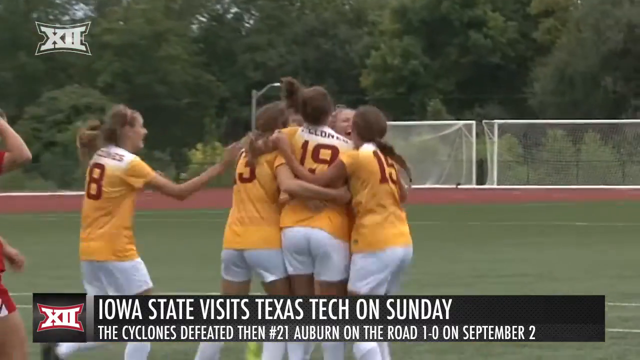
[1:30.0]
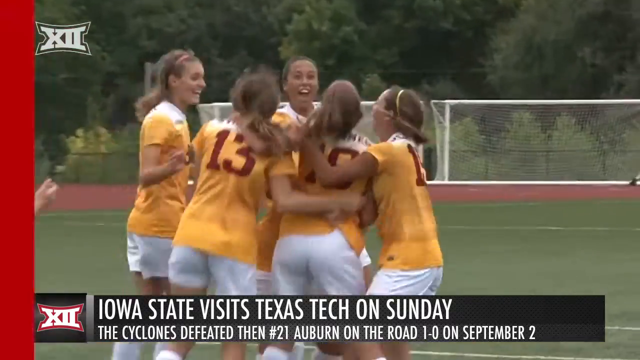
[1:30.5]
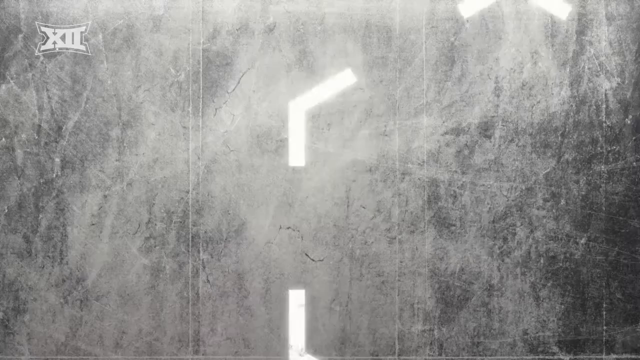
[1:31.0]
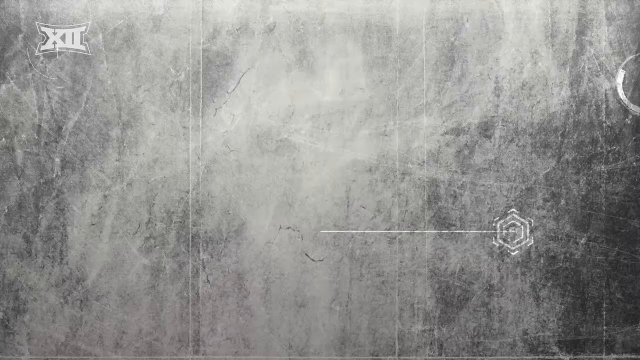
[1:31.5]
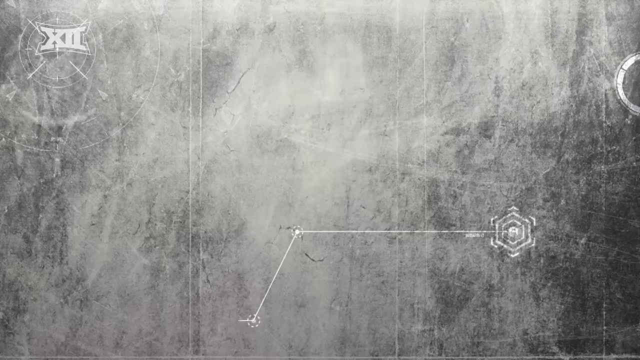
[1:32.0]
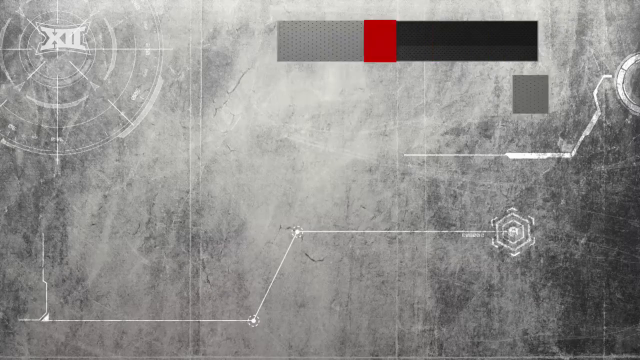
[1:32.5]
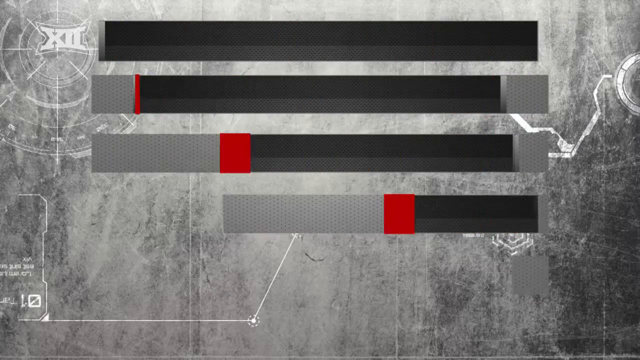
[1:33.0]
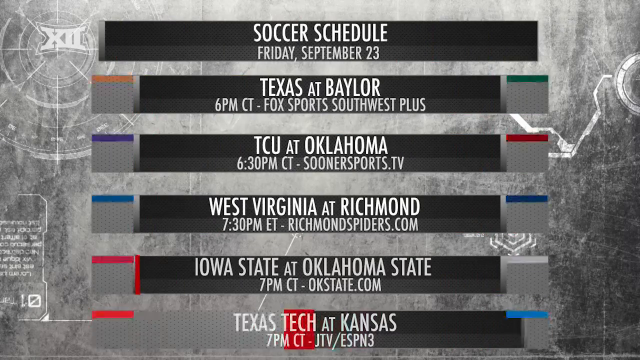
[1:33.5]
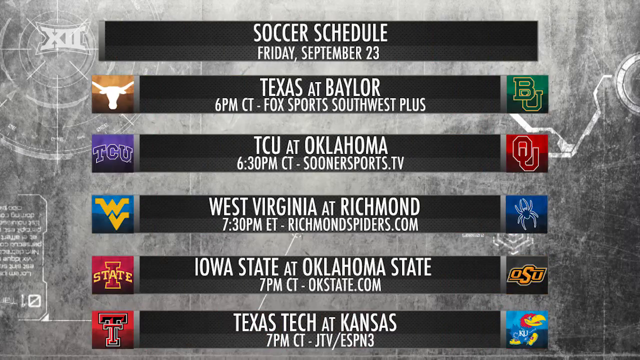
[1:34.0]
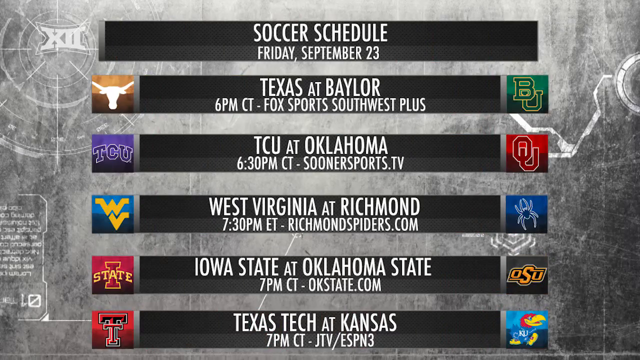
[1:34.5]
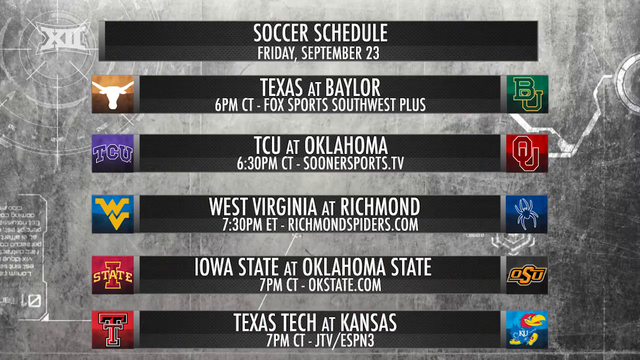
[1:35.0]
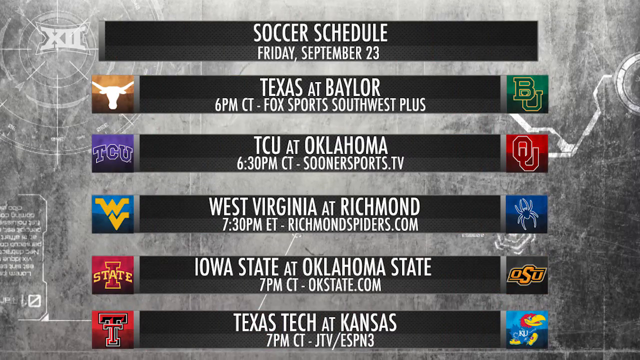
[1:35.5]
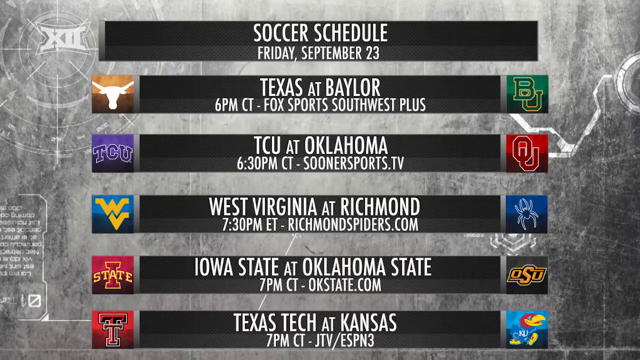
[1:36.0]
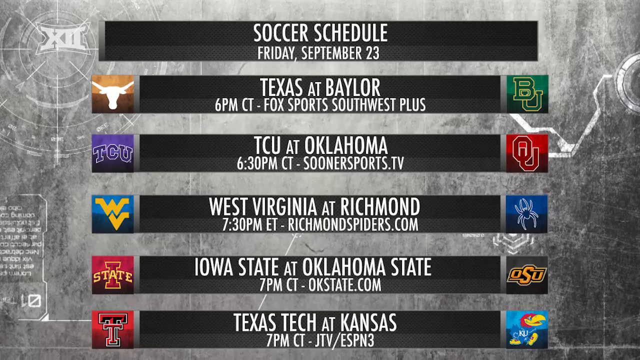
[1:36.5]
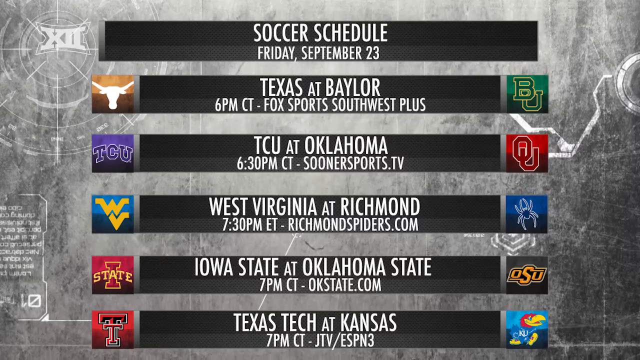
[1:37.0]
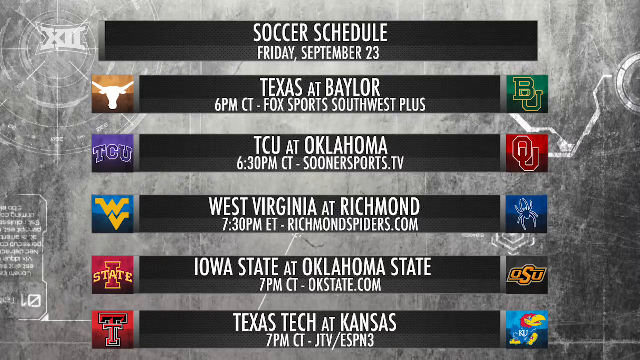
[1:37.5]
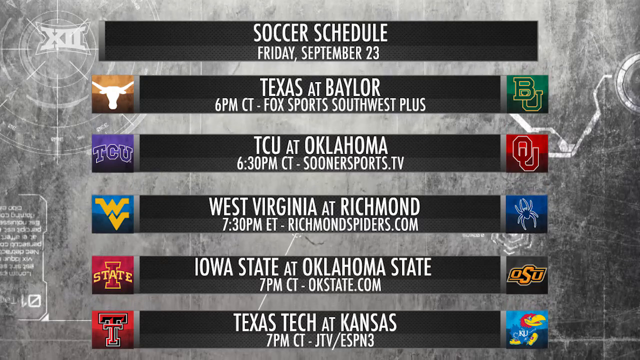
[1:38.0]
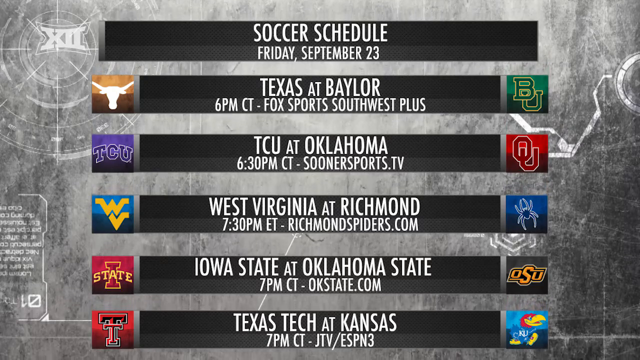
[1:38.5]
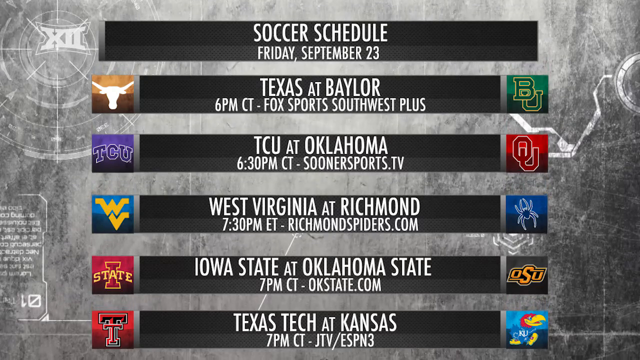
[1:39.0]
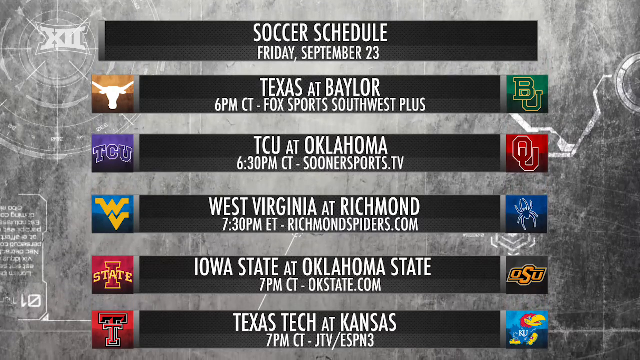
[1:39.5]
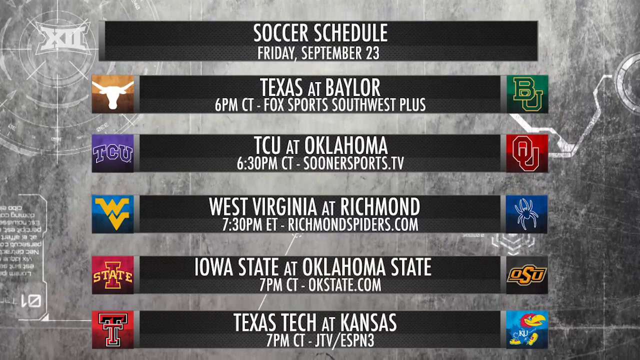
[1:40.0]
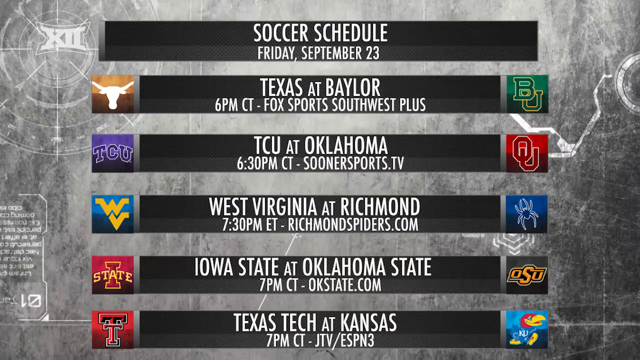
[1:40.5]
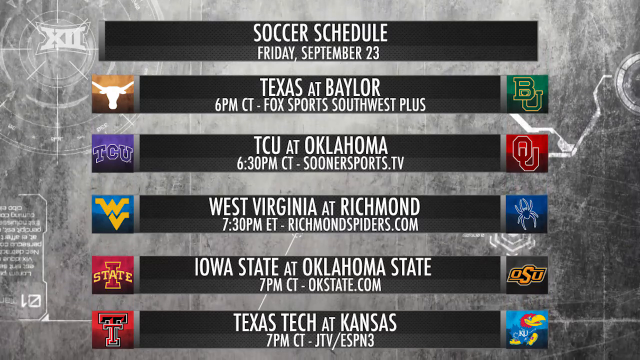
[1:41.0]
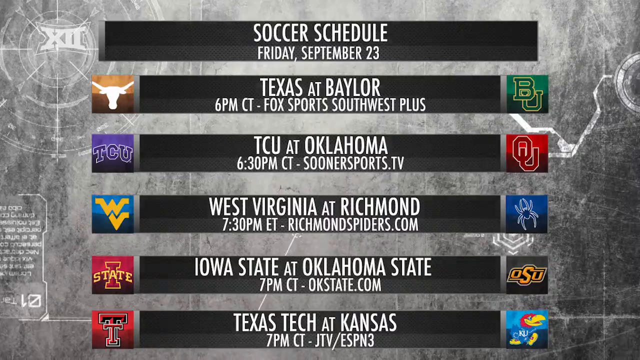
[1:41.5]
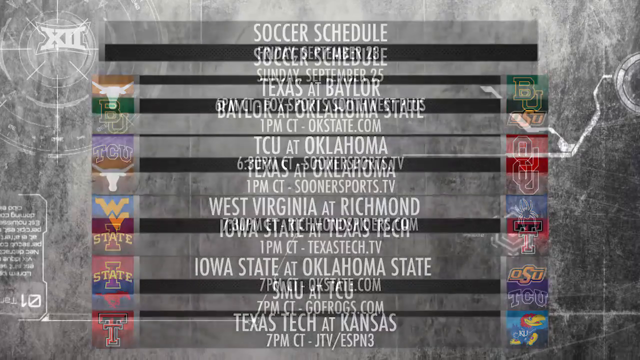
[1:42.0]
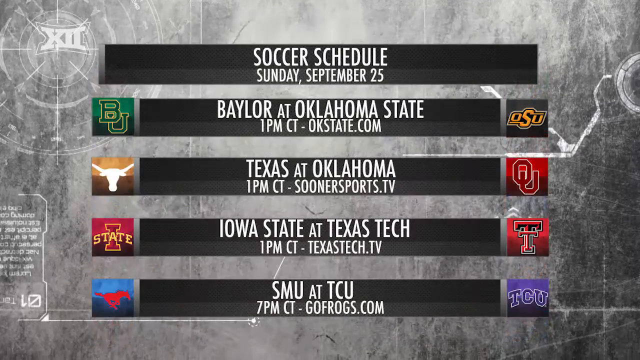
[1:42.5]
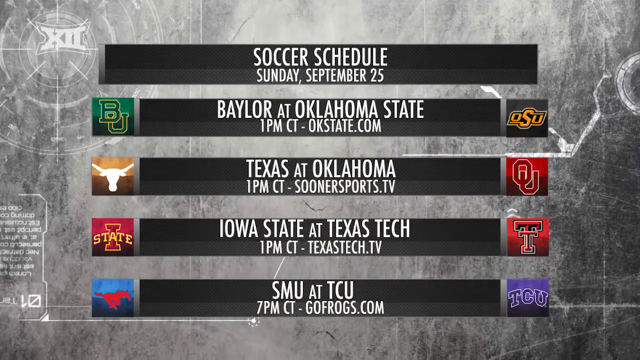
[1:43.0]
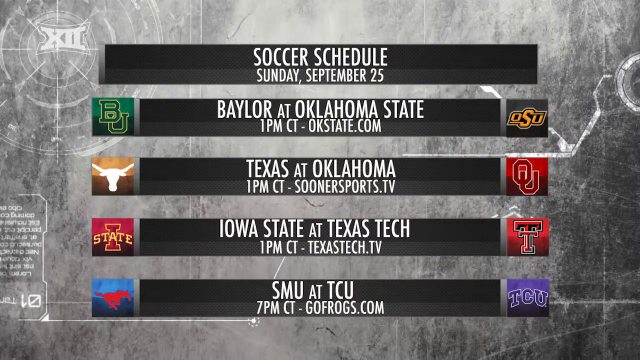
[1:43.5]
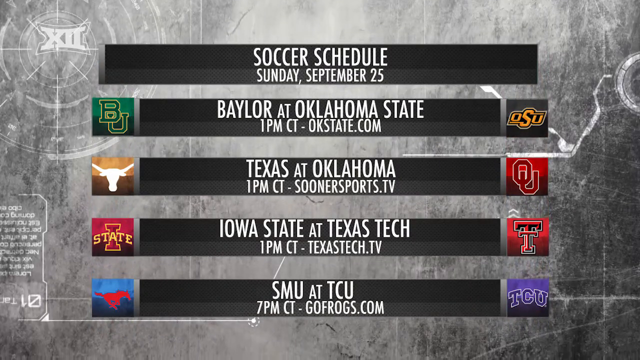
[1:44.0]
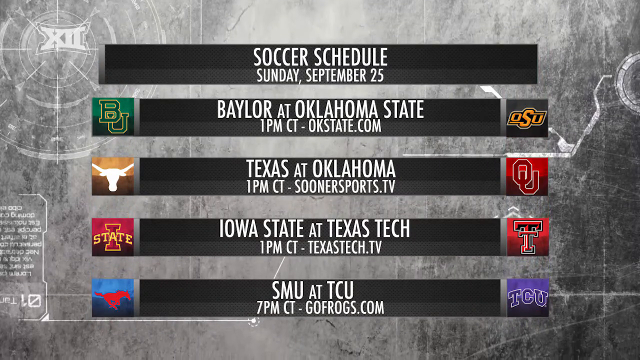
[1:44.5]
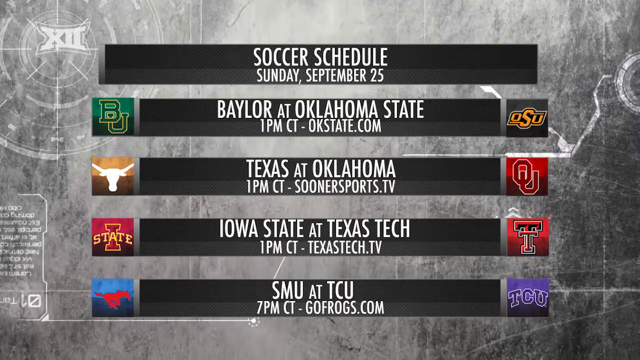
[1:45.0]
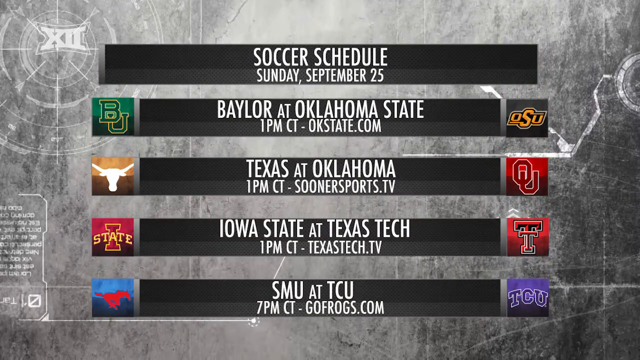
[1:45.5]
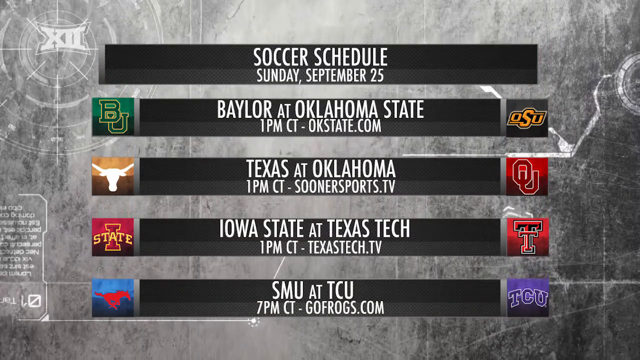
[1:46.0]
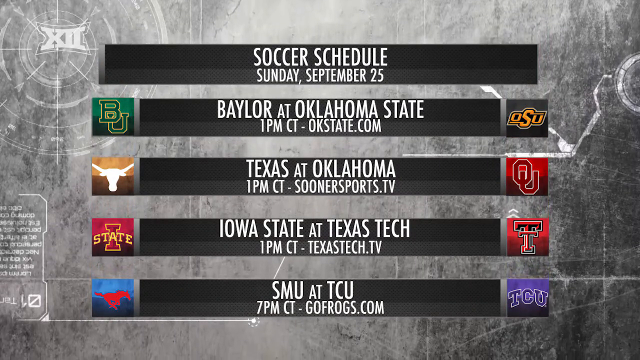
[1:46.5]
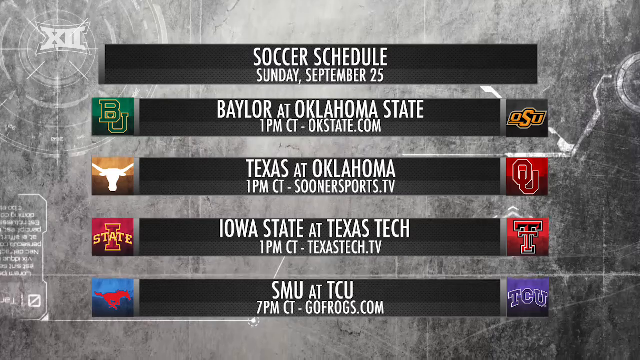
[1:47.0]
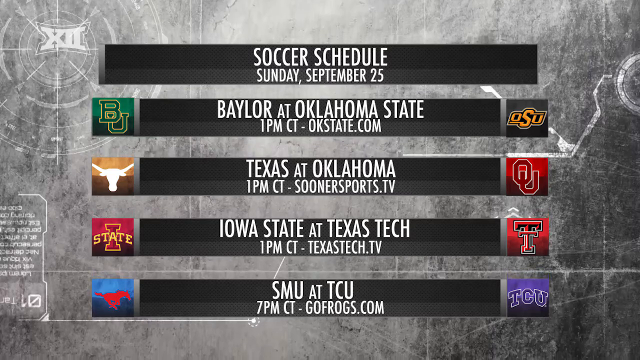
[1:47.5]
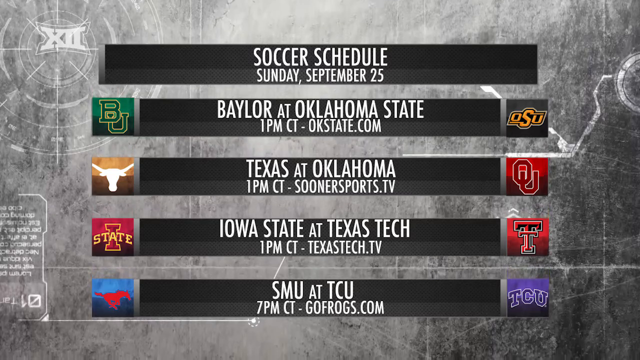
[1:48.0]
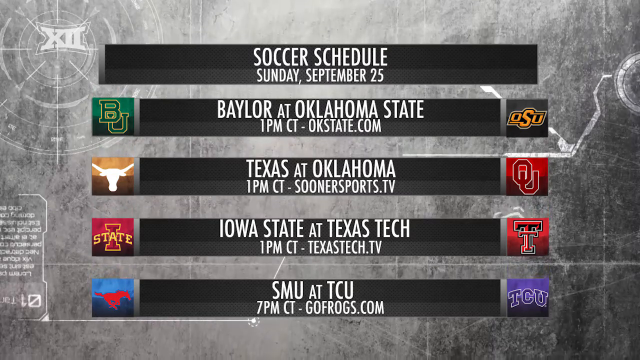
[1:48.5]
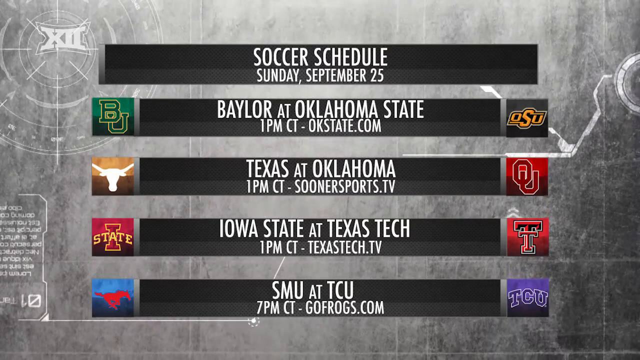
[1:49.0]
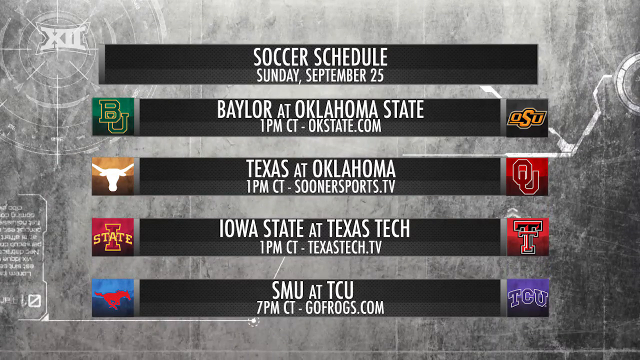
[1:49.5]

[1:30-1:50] Team players, of unclear team, are jumping up and down in the middle of the field, apparently after someone scored. They wear orange-yellowish jerseys with numbers in a red shade; visible jersey numbers include 19, 15, 3 and 8, with number 8 on the left side of the screen jumping. A playbook-like background then appears with "soccer schedule Friday September 23rd": Texas at Baylor at 6 p.m. CT, TCU at Oklahoma at 6:30 p.m. CT, West Virginia at Richmond at 7:30 Eastern Time, Iowa State at Oklahoma at 7 p.m. Central Time, and Texas Tech at Kansas at 7 p.m. Central Time.